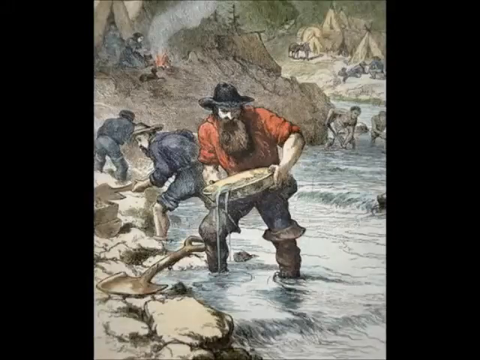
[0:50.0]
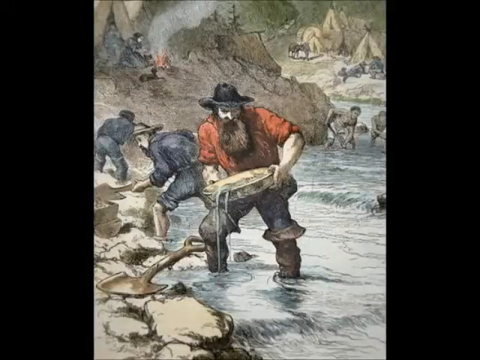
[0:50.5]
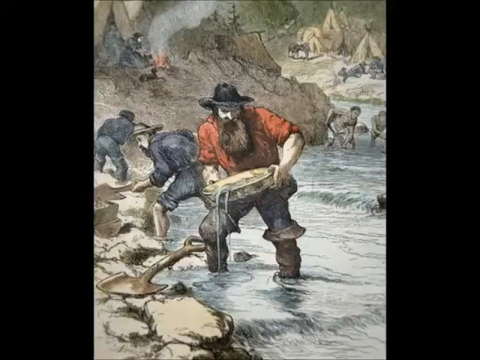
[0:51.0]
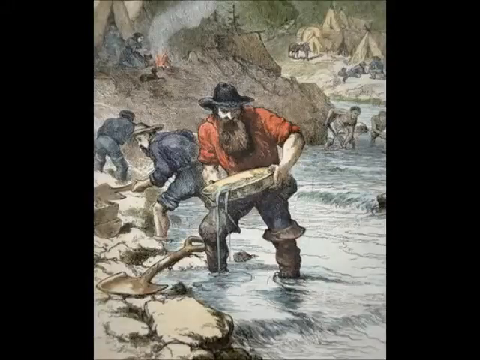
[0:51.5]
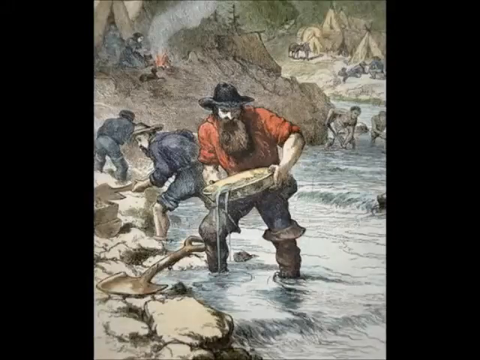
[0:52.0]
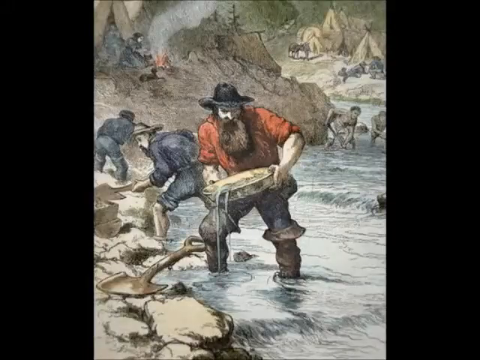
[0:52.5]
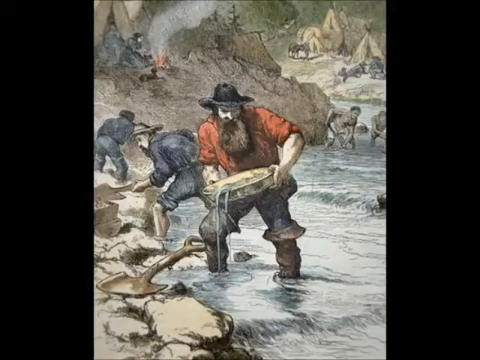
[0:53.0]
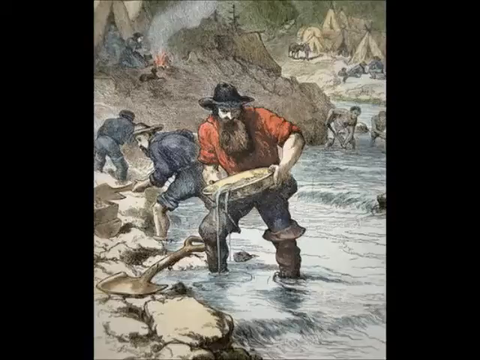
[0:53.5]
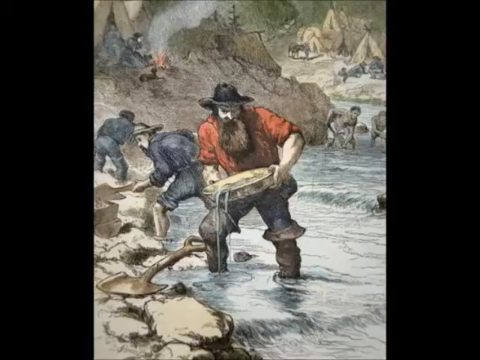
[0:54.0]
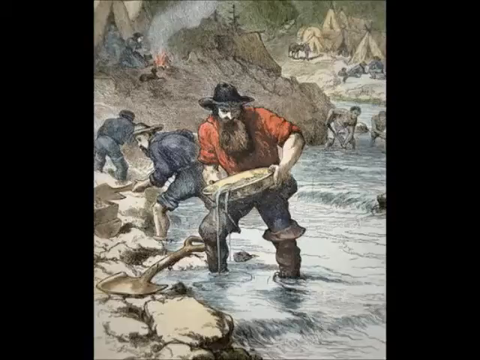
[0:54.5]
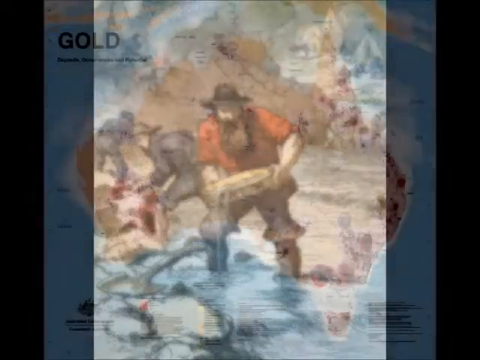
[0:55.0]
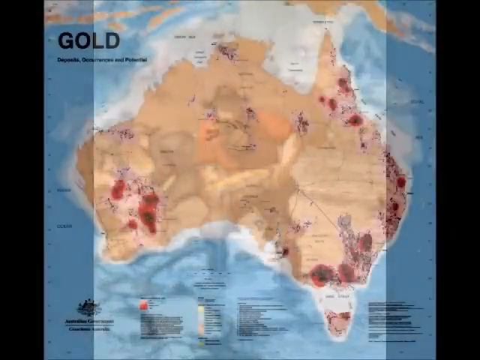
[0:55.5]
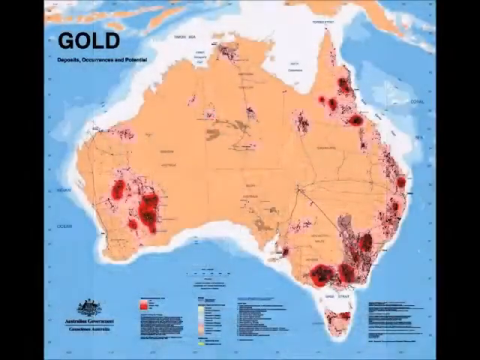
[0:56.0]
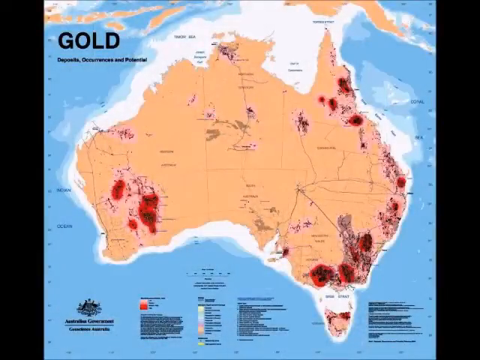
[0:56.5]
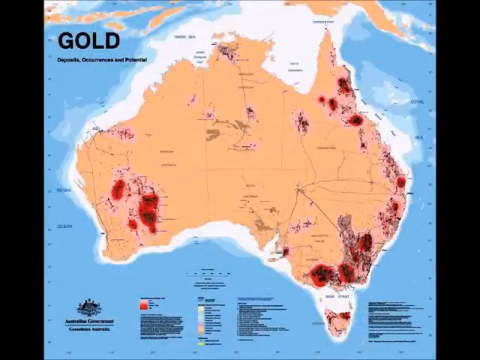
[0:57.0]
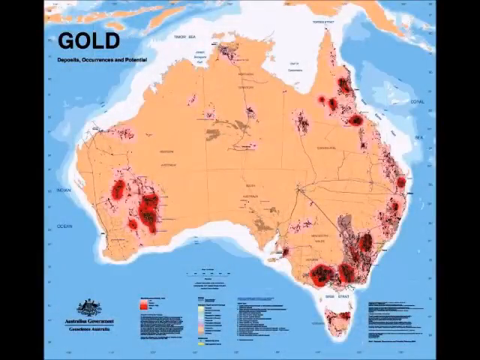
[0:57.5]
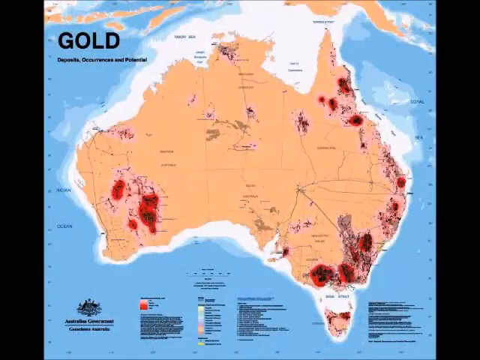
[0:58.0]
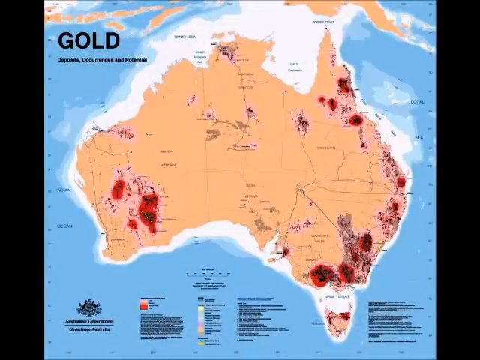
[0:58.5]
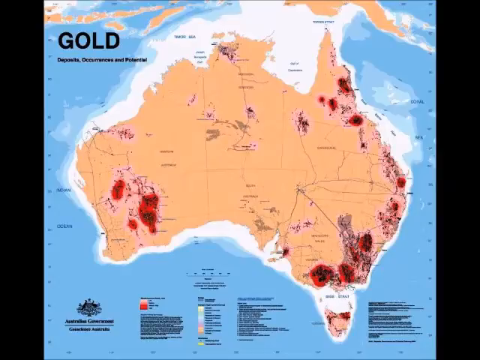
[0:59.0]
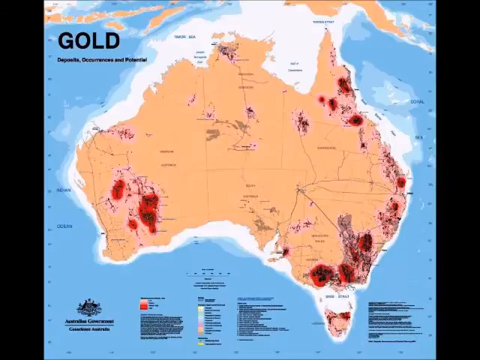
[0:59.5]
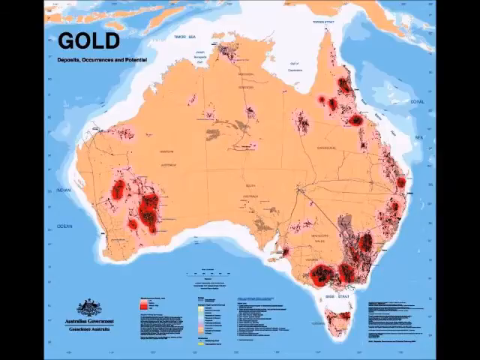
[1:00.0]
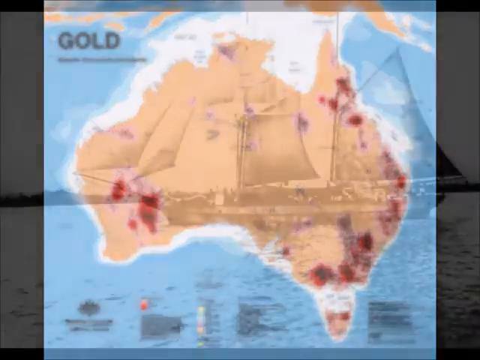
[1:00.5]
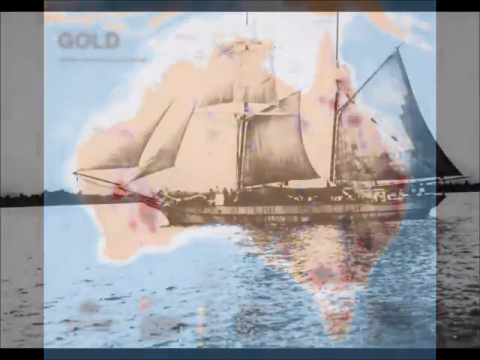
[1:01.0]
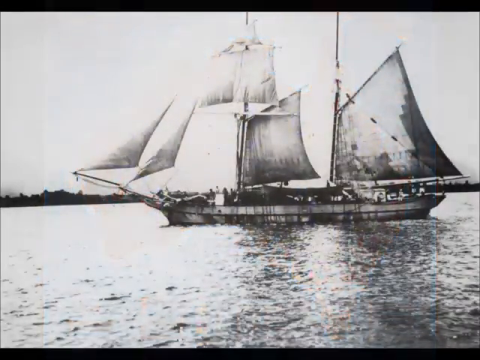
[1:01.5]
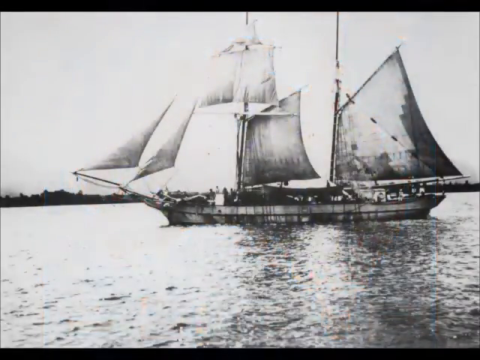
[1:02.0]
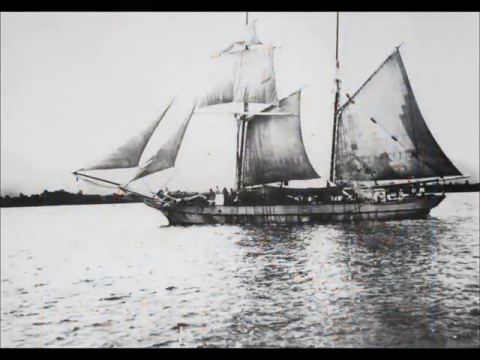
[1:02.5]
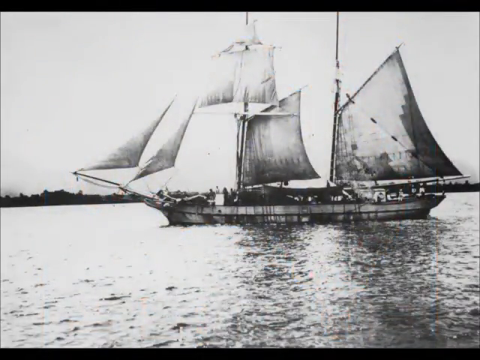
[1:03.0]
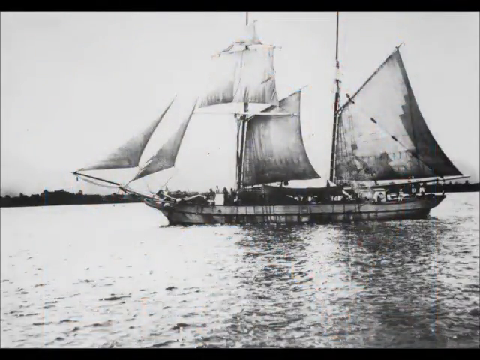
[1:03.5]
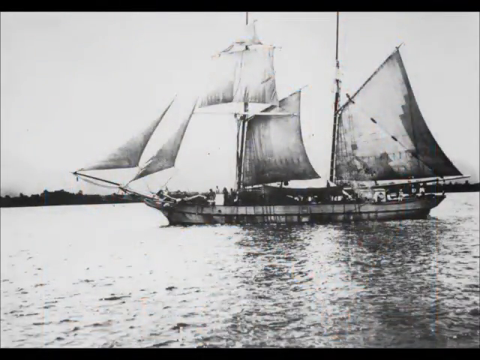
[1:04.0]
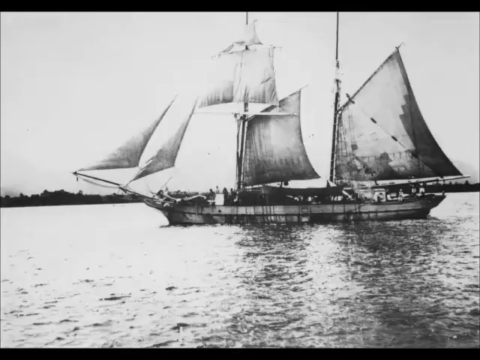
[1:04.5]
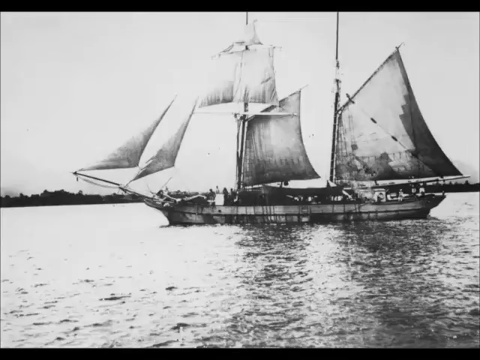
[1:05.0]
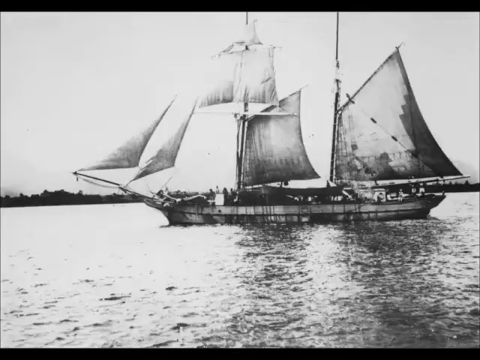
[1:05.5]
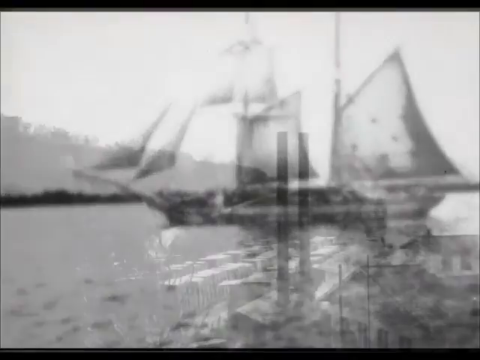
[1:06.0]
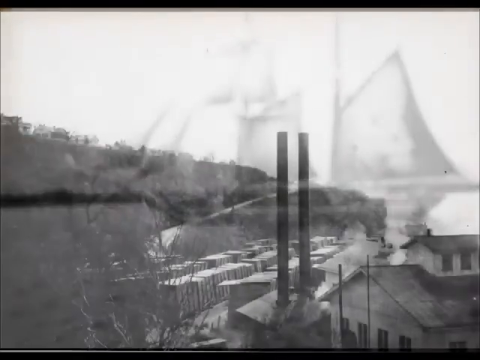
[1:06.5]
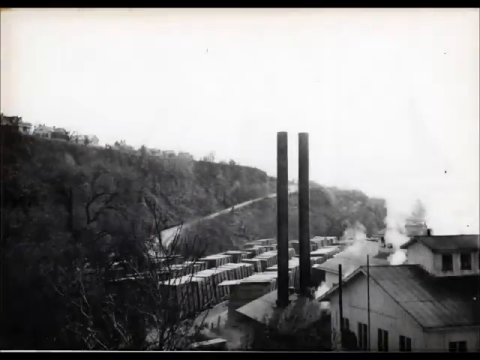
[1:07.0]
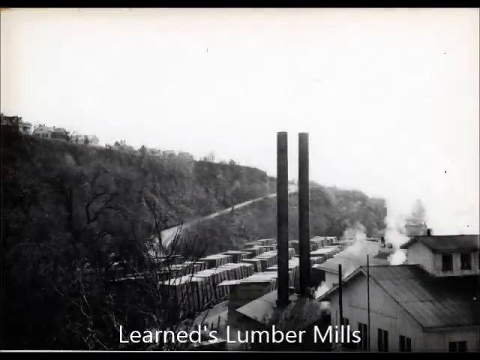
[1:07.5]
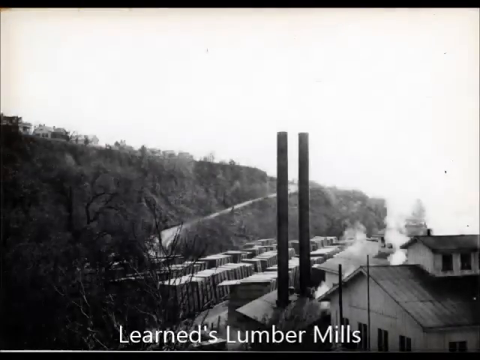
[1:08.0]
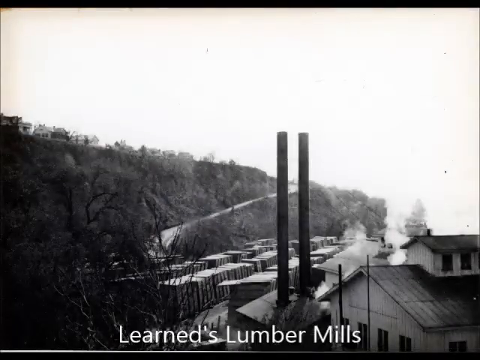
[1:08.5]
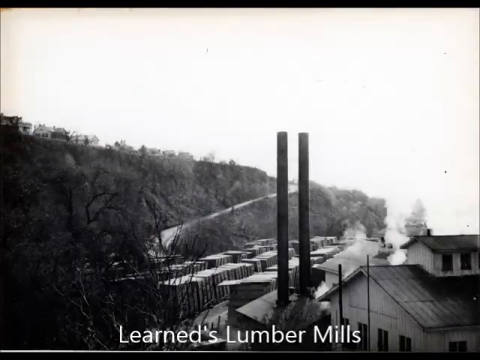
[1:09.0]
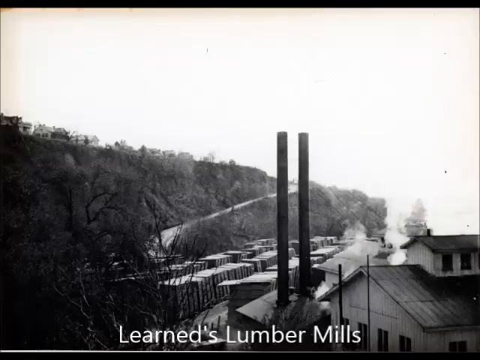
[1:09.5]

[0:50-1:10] A man stands in a stream, apparently panning for gold. He wears boots that come up to his thighs, a red long-sleeved shirt with the sleeves rolled up, and a black hat, and has a full brown beard that reaches the middle of his chest. He holds a pan with both hands, with water dripping out of it and what looks like gold-rich dirt in it. A shovel is next to him. Behind him a couple of men are shoveling, and a little farther down the creek other men appear to be shoveling. A woman behind him has started a fire, and farther behind him is a campsite with a horse and what look like tents. Next comes a map of Australia labeled "gold," with red points apparently indicating the best places to dig for gold. Then a black and white picture shows a sailing ship with five sails just sitting on the water. After that comes a black and white picture of a lumber mill with a lot of lumber, a makeshift dirt road made for the lumber yard on the side of a hill, homes toward the top of the hill, and two big smokestacks coming from the lumber yard.